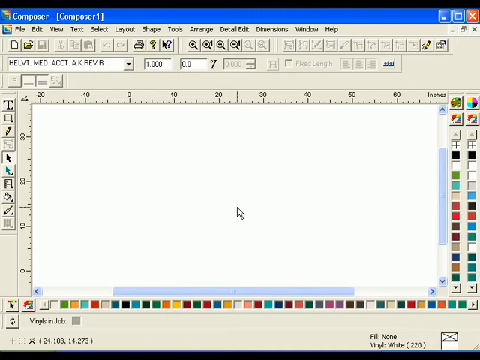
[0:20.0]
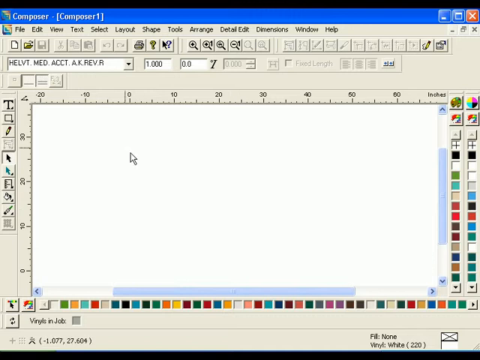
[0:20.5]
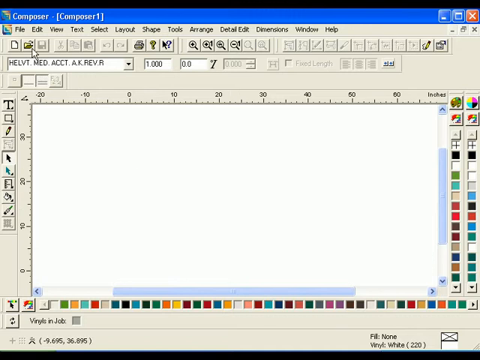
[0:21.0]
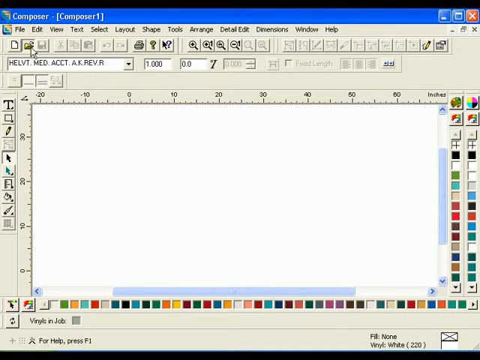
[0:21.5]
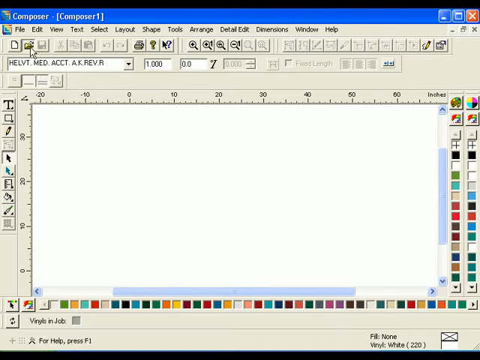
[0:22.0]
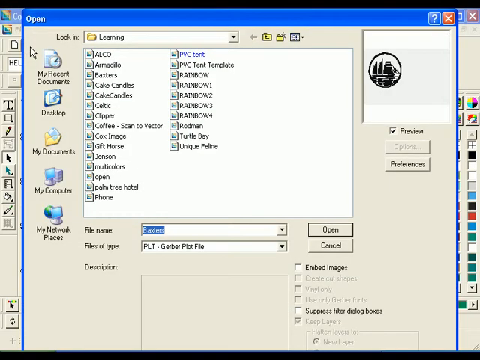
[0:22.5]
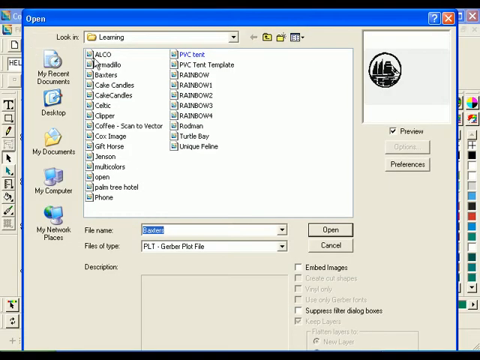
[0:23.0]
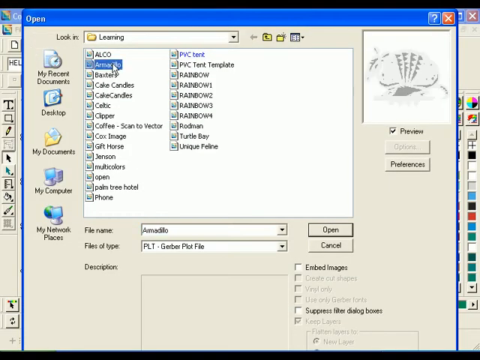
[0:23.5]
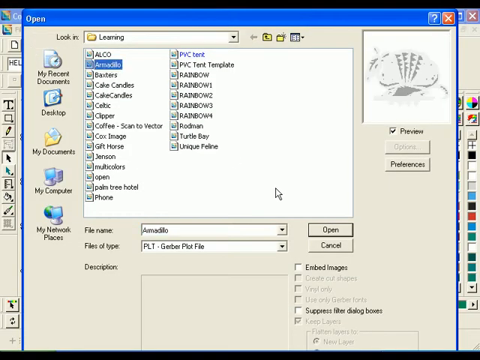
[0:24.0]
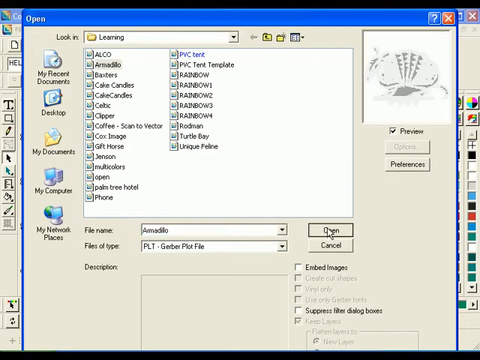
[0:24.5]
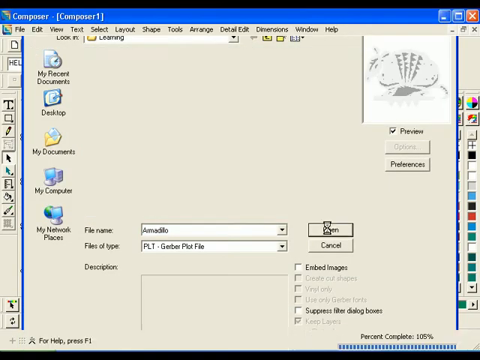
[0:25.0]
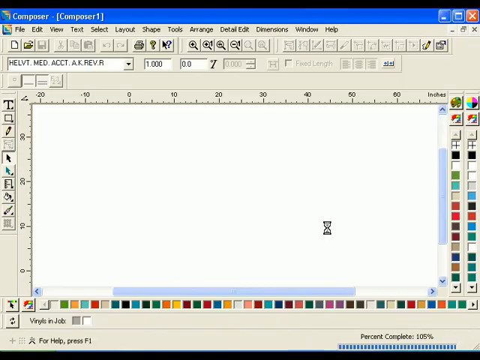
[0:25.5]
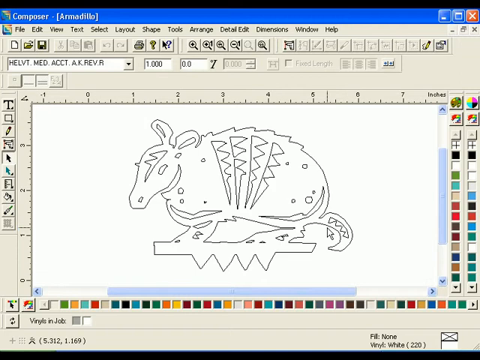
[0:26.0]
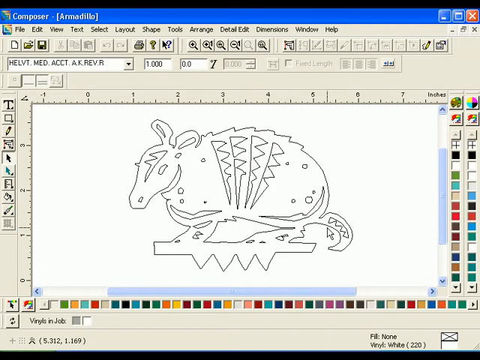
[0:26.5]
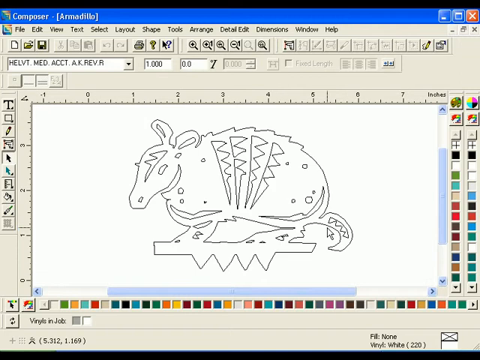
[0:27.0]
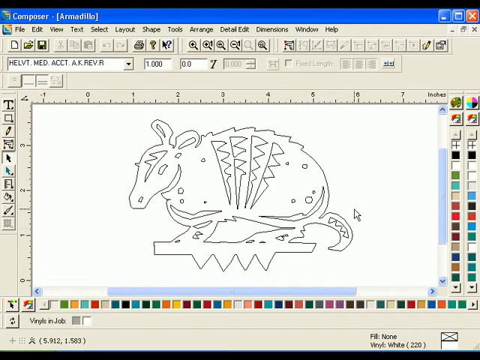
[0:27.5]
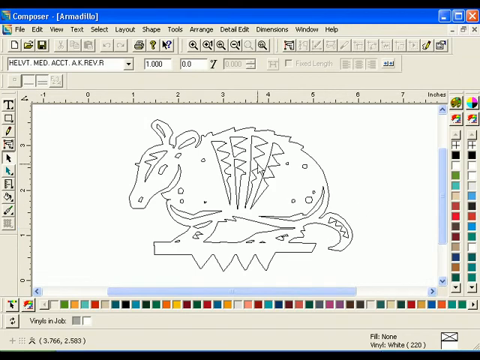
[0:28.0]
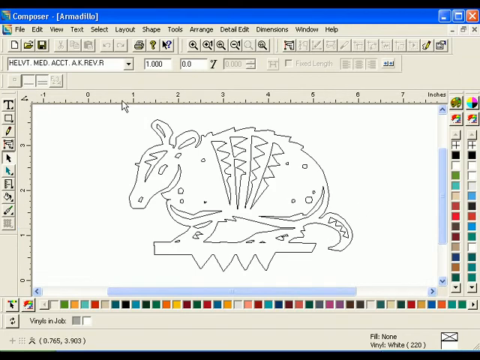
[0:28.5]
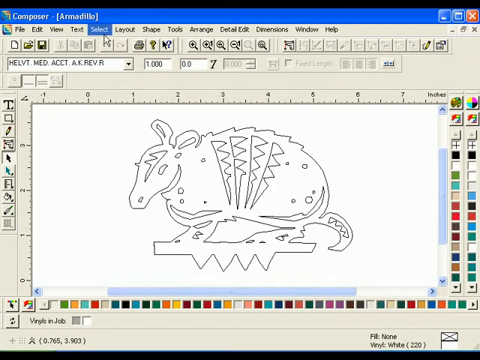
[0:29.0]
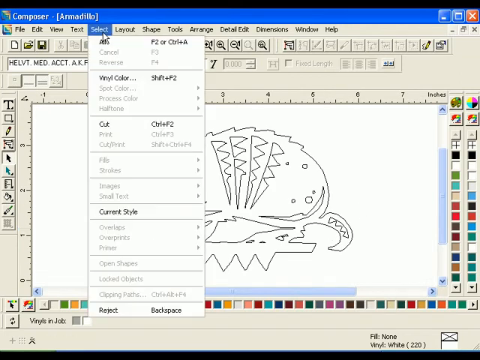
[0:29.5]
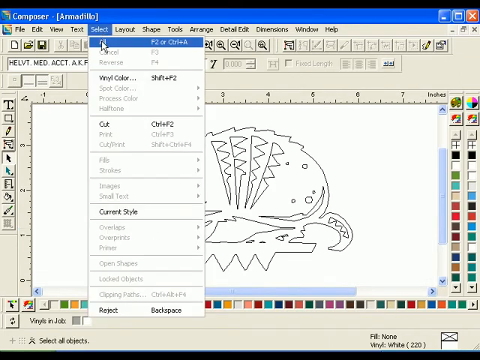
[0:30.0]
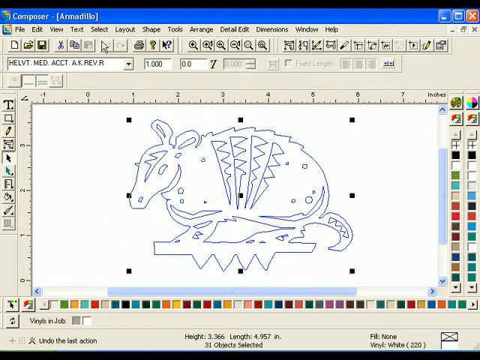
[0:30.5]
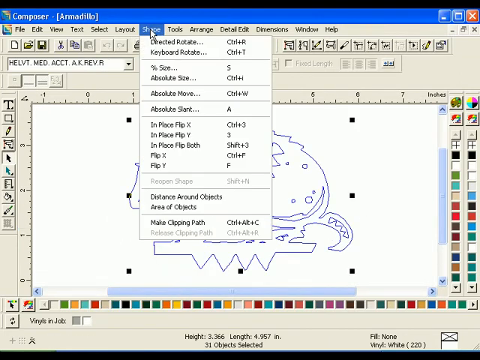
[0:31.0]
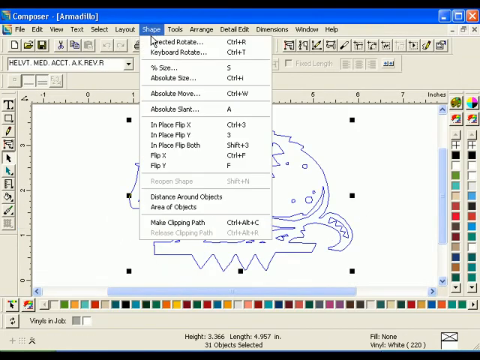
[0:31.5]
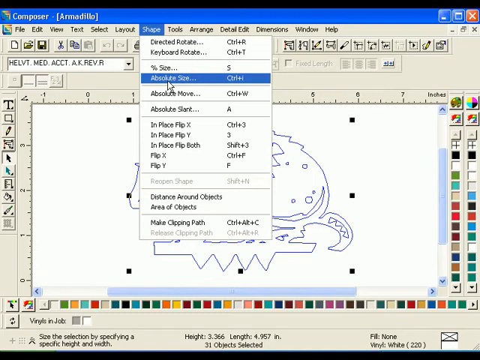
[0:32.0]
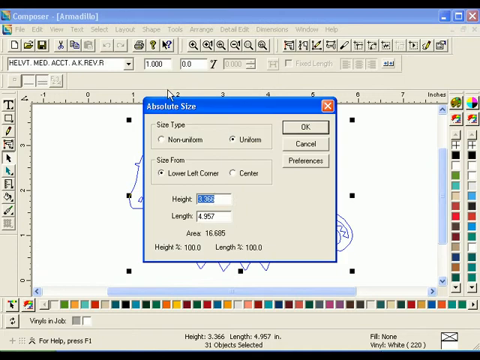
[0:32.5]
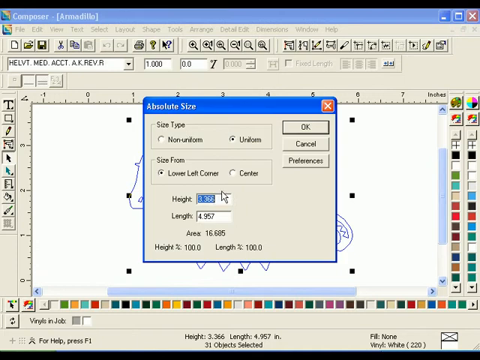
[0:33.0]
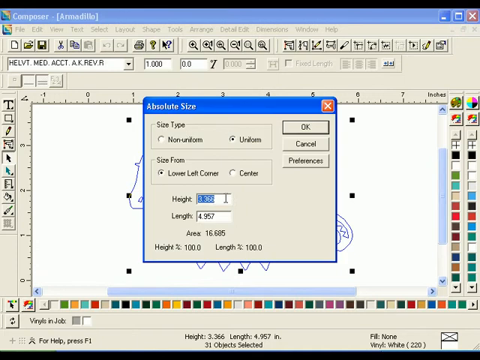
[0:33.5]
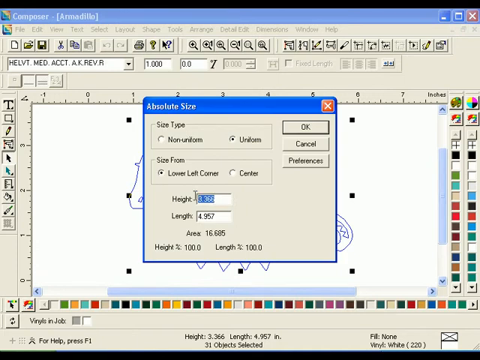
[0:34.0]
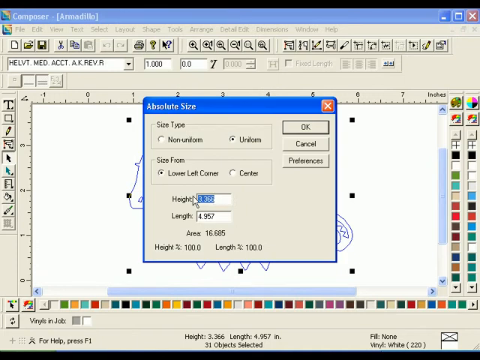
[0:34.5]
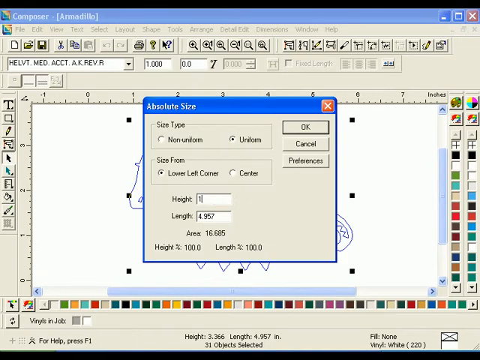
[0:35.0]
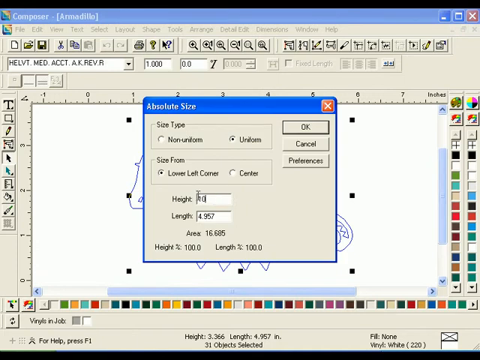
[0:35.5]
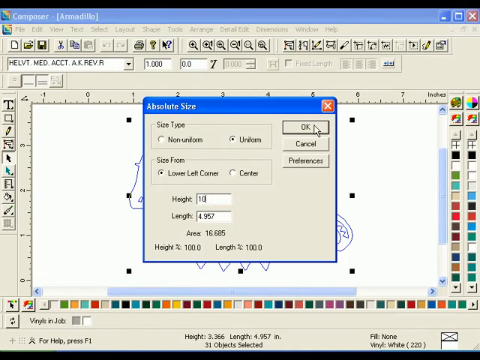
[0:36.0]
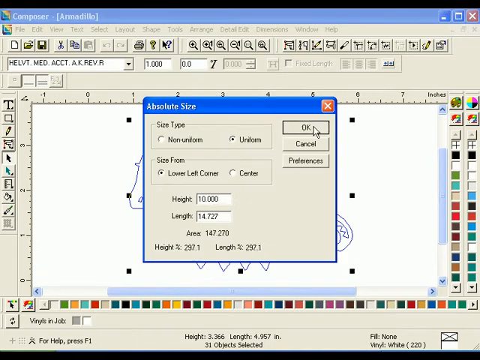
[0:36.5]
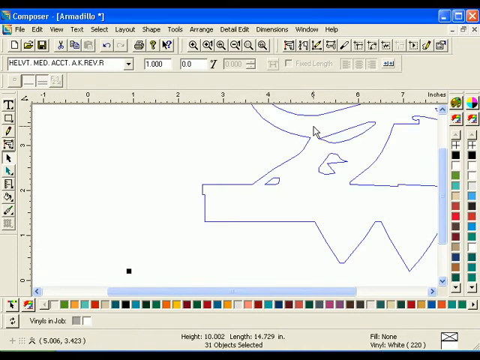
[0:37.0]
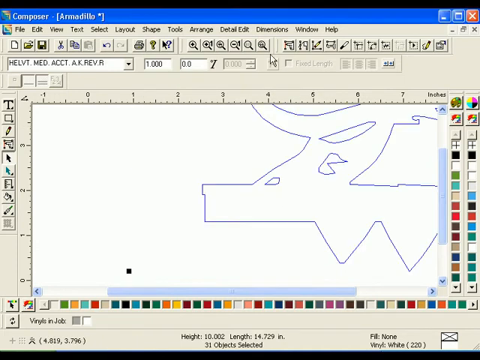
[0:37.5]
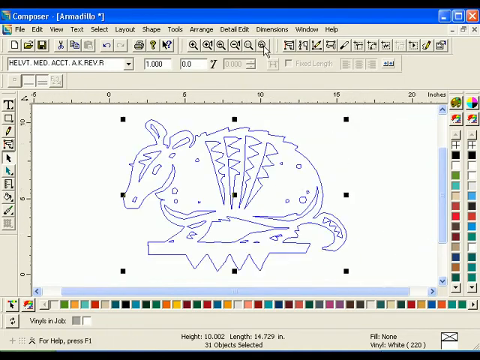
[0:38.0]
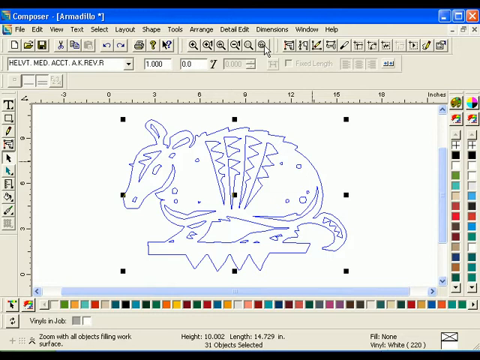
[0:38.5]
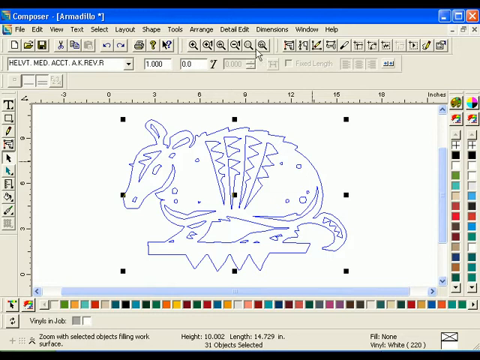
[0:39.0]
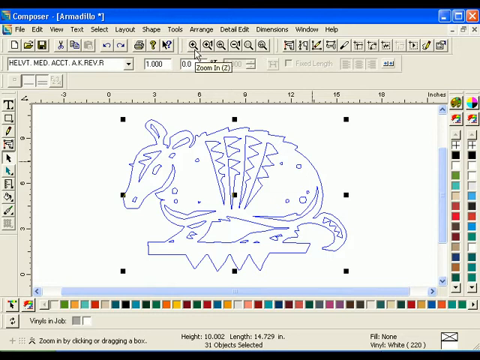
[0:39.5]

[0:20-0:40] The application appears to be opening. At the top left it reads "composer" in white, then in brackets "composer one," and it looks almost like a paint application. There is a white canvas in the middle and many colored squares at the bottom and on the right side. The menu headers at the top read "file, edit, view, text, select, layout, shape, tools, arrange, detail, edit, dimensions, window and help." A white cursor moves to the top left of the application and clicks the open-folder icon. A pop-up opens with "look in" at the top and a folder named "learning"; the mouse selects a file that reads "armadillo," then moves to the bottom right and clicks the Open button. A line drawing of an armadillo, drawn with a thin black line, now appears on the left side of the white canvas. The cursor goes to the Select menu at the top, which opens a drop-down, and clicks "all." Nine black dots appear around the armadillo picture: at the corners, at the middle of the top, bottom, left and right sides, and in the center. The mouse then opens the Shape menu and clicks the "absolute size" item. An absolute size pop-up appears with a highlighted height field containing 3.366; the cursor highlights it and types 10 instead, then clicks the OK button at the top right. Finally it clicks the zoom-plus magnifying icon on the toolbar.